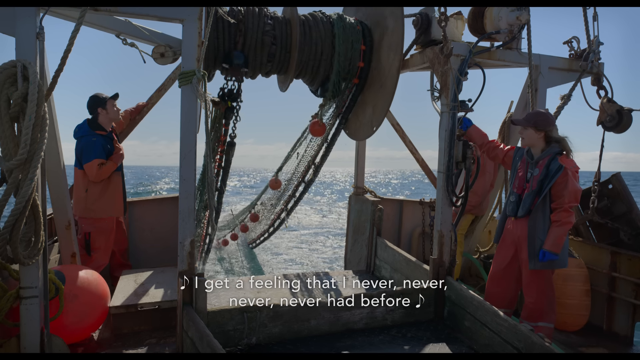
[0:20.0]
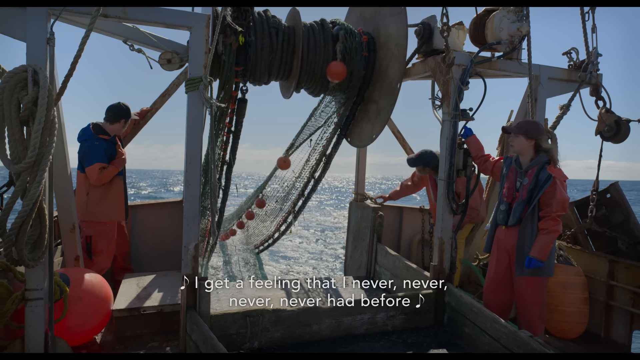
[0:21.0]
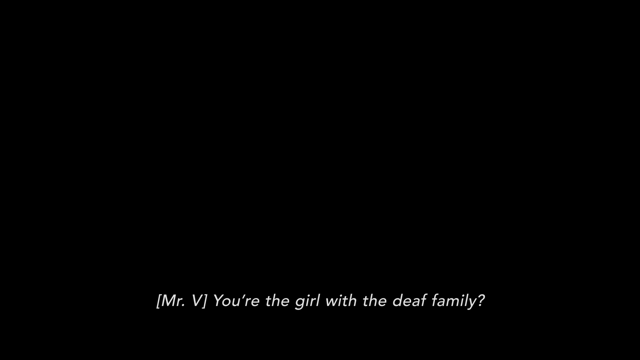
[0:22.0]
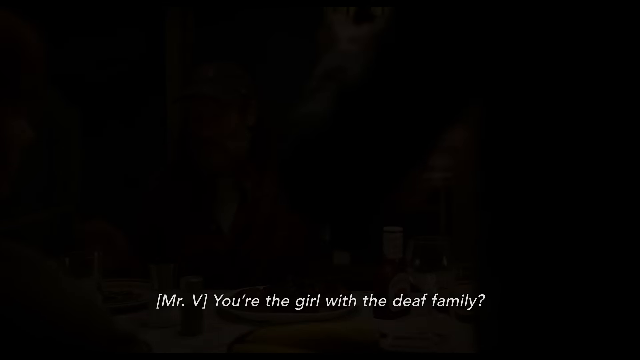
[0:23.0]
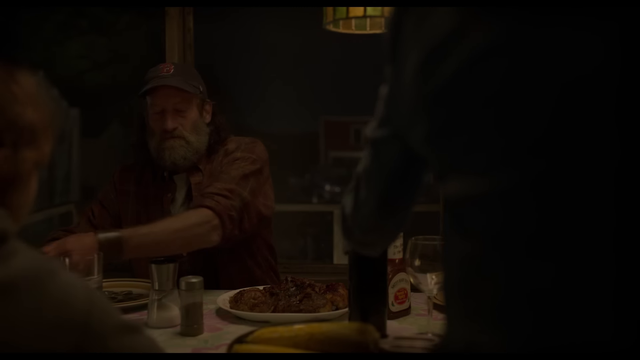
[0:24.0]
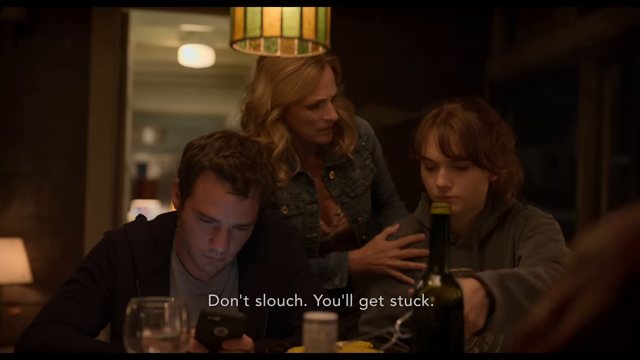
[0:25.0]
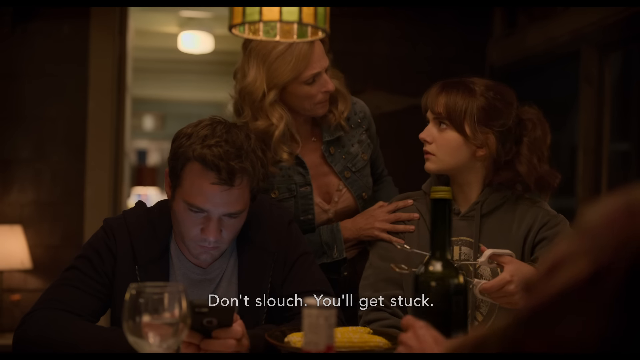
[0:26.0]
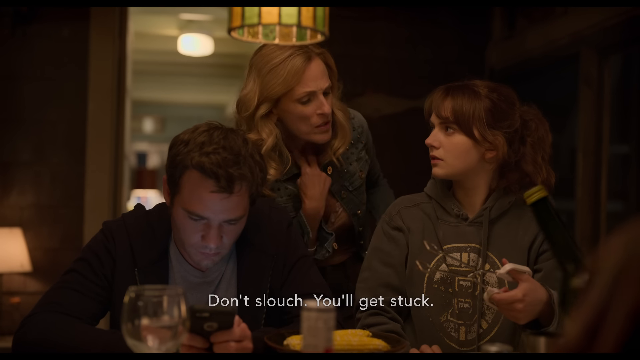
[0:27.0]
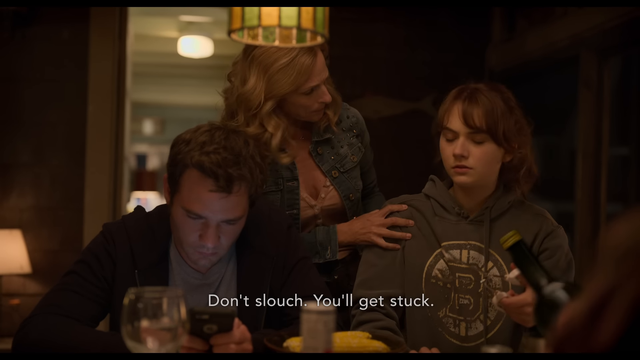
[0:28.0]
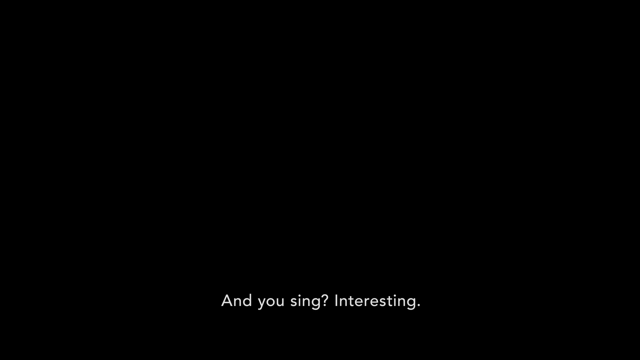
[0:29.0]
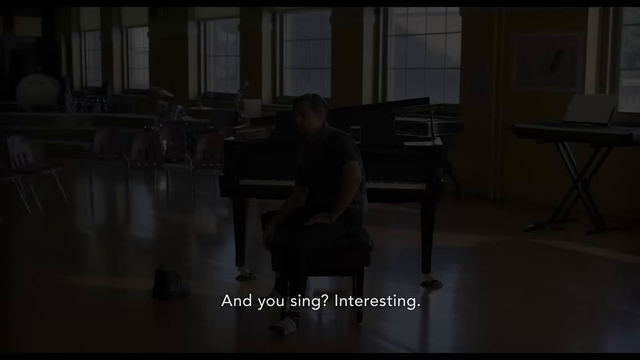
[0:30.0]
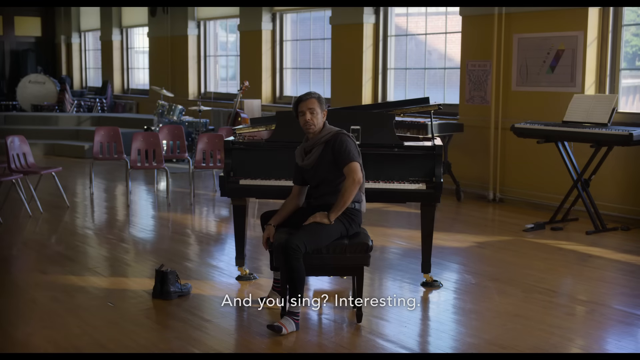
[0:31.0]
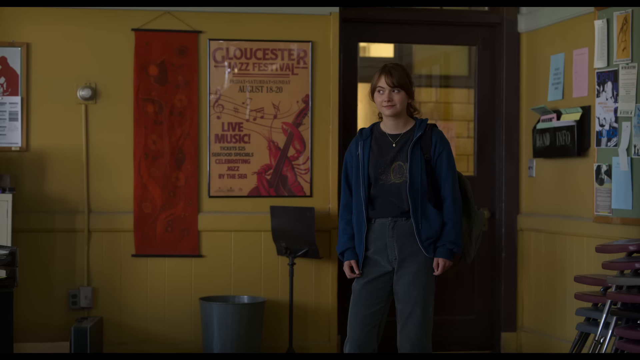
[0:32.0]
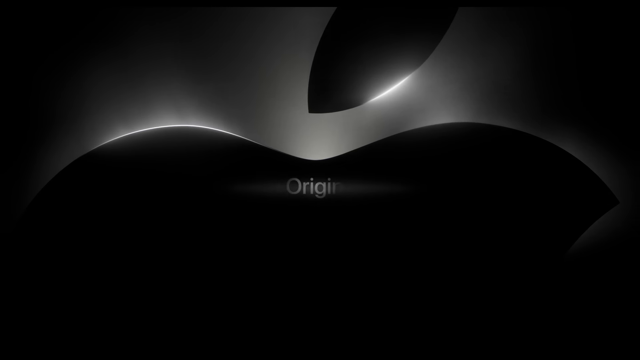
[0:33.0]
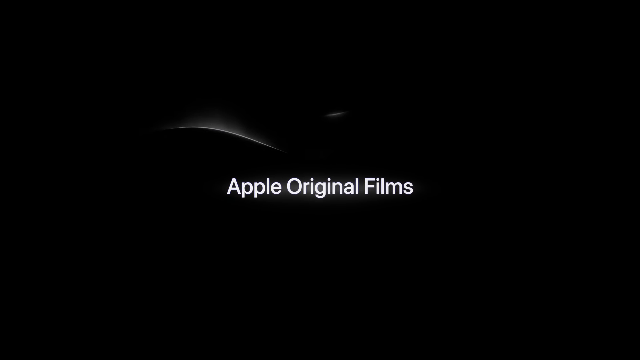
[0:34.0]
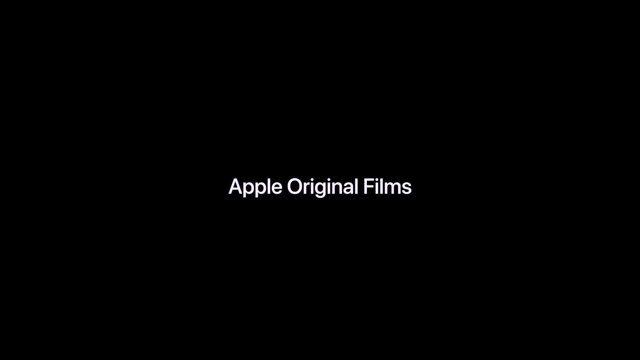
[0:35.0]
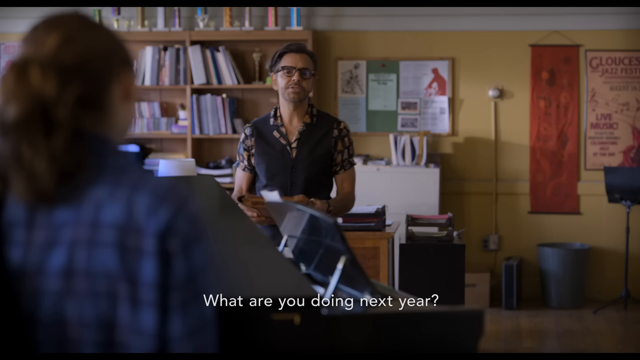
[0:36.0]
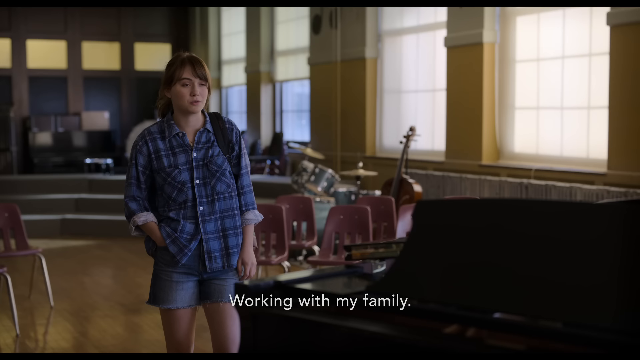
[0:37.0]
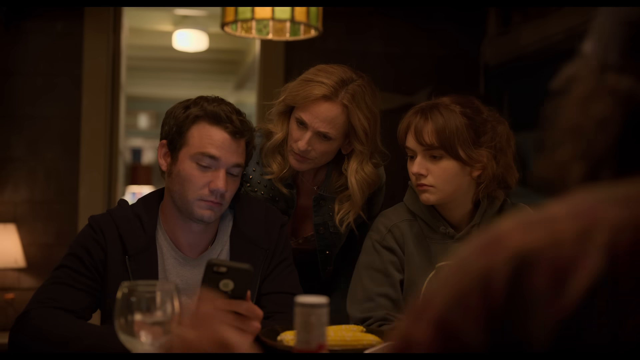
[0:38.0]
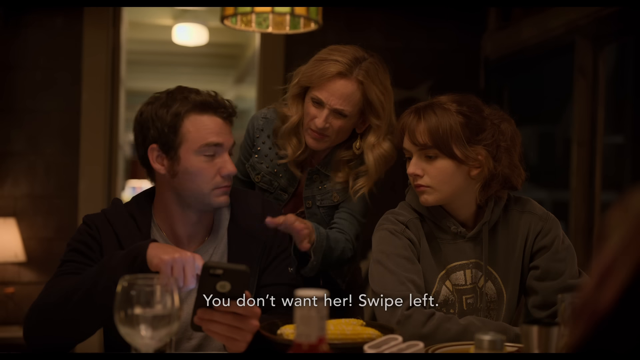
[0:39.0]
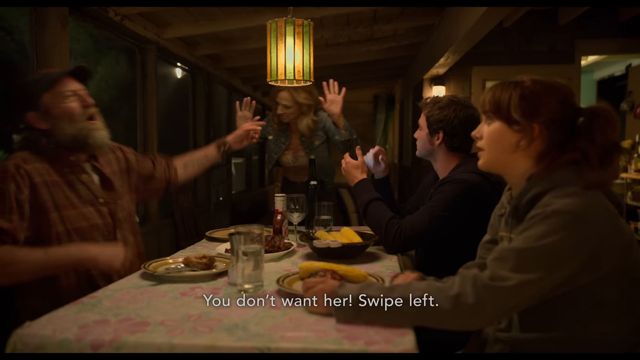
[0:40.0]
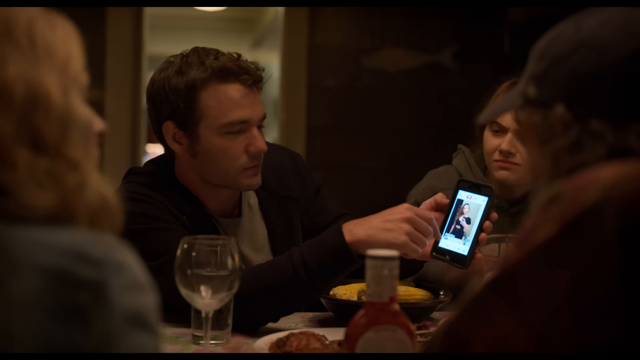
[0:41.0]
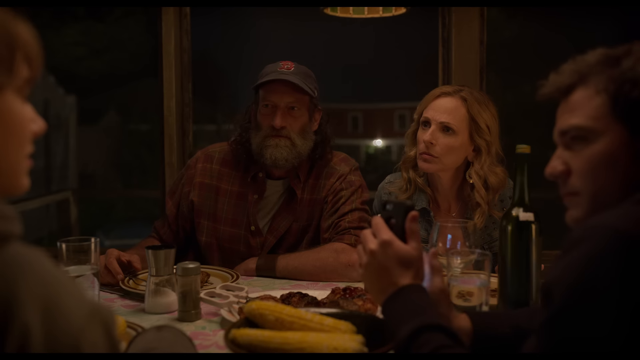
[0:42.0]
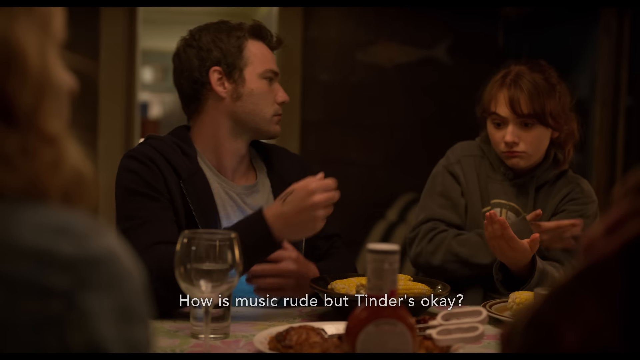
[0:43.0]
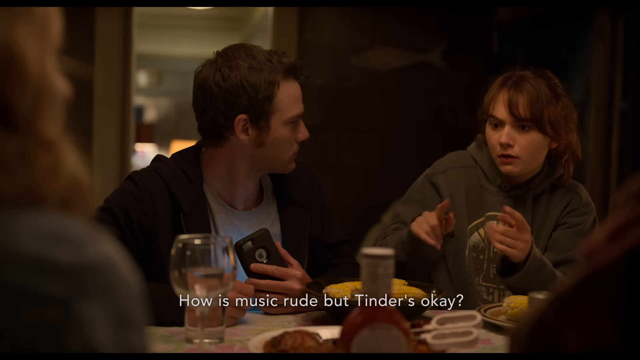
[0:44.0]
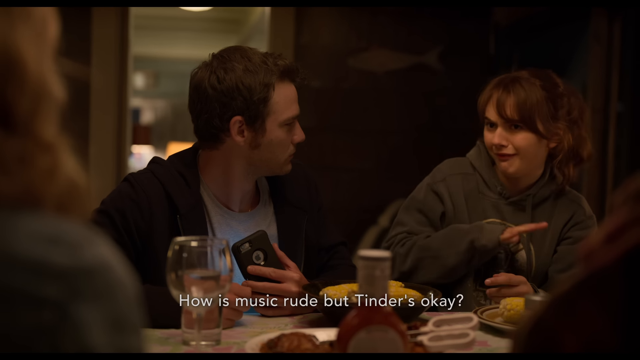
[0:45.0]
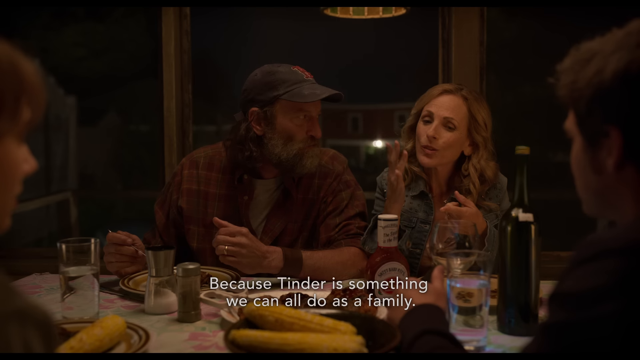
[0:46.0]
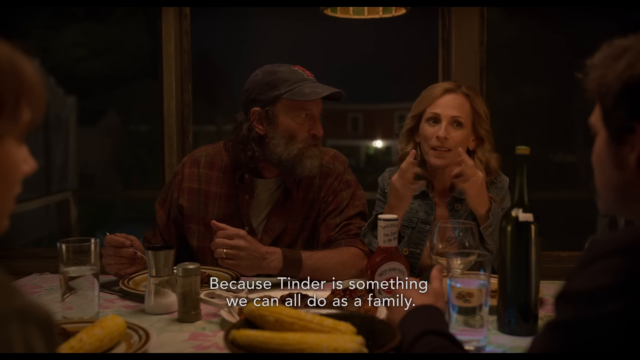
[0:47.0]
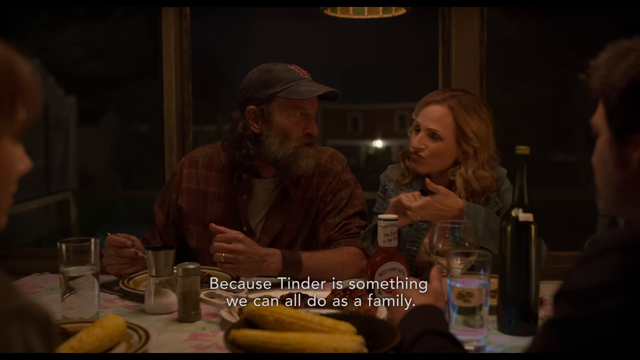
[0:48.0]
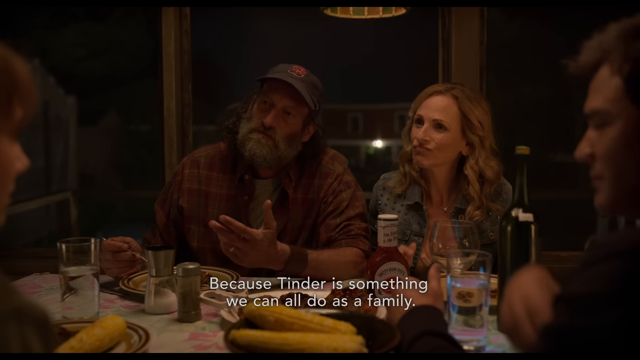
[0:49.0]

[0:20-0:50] A large ship appears, which looks like a fishing vessel, with a large reel-type contraption reeling something up. Three people dressed like fishermen wear bright orange overalls and jumpsuits. The scene switches to a bar scene with people gathered around tables, including someone in a red shirt. On the other side are the two teenagers, with what looks like the girl sitting to the right of the male, and the blonde woman leans in and puts her hand on the young girl's shoulder. The scene switches to the young girl inside an office with a little wall. A black screen says "Apple Original Films." Then what looks like a classroom scene shows a teacher and a girl facing each other.